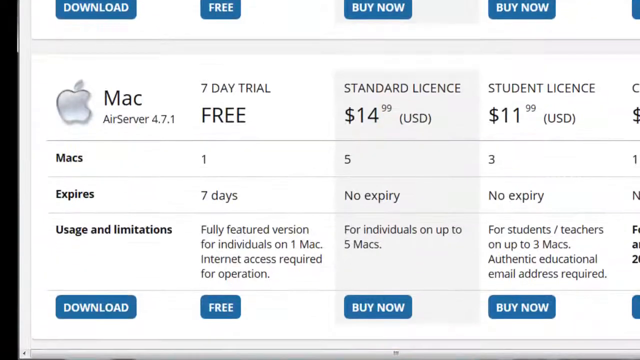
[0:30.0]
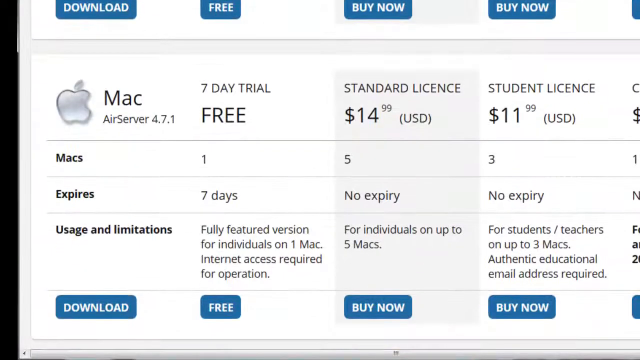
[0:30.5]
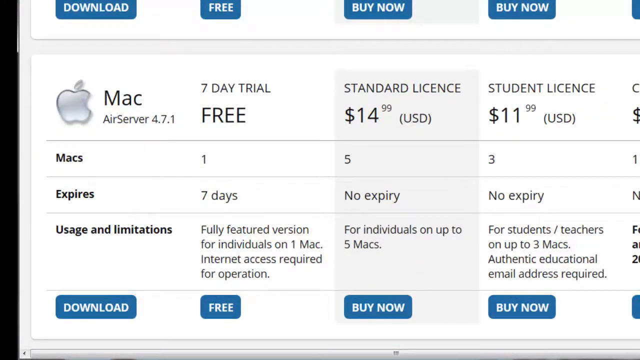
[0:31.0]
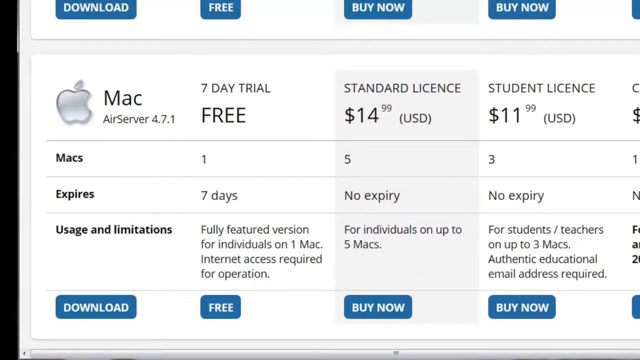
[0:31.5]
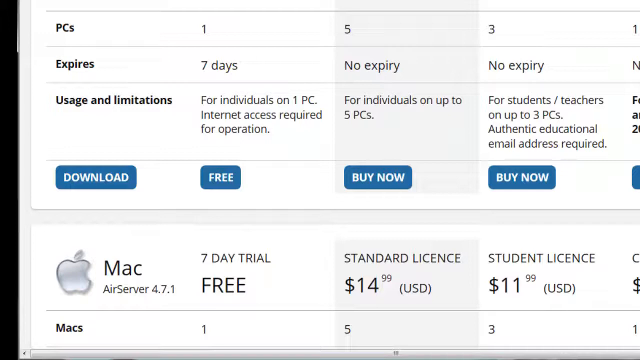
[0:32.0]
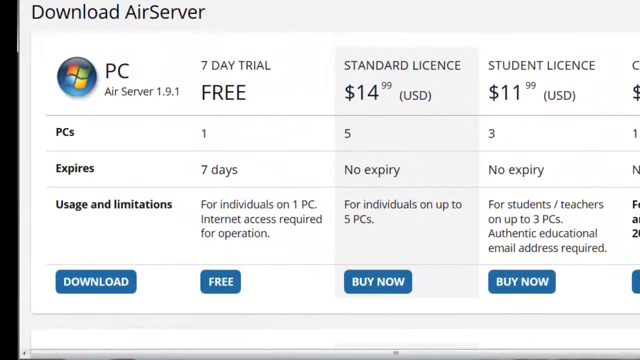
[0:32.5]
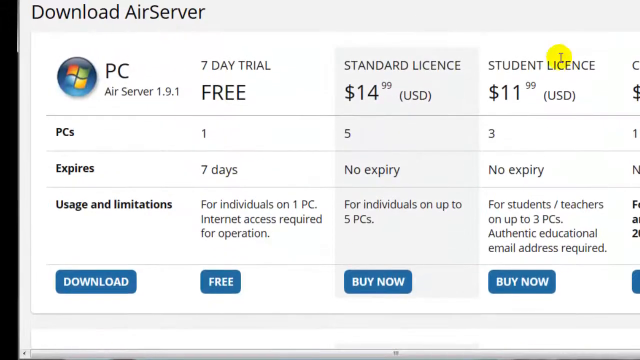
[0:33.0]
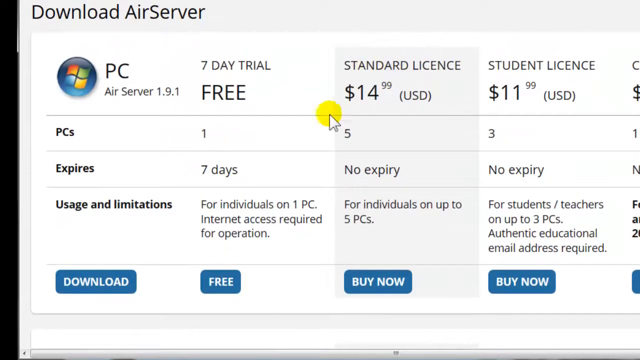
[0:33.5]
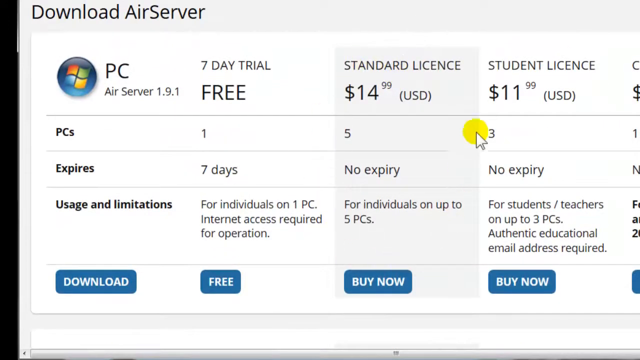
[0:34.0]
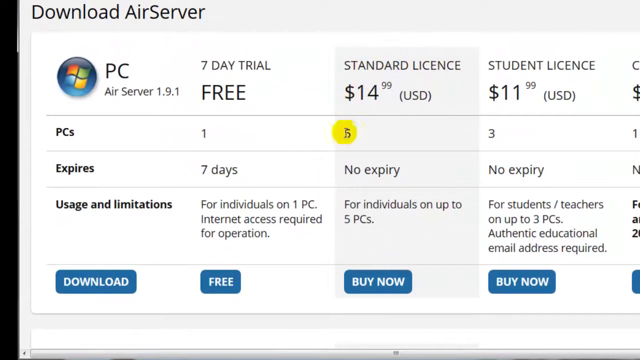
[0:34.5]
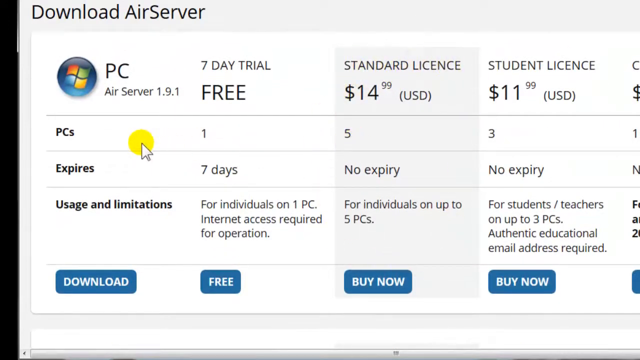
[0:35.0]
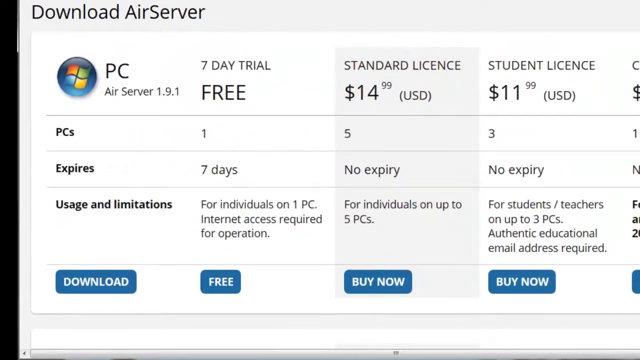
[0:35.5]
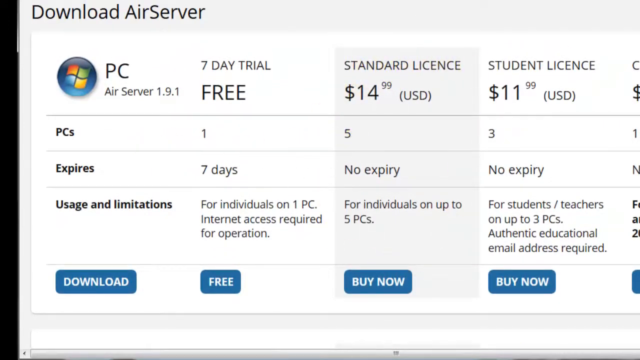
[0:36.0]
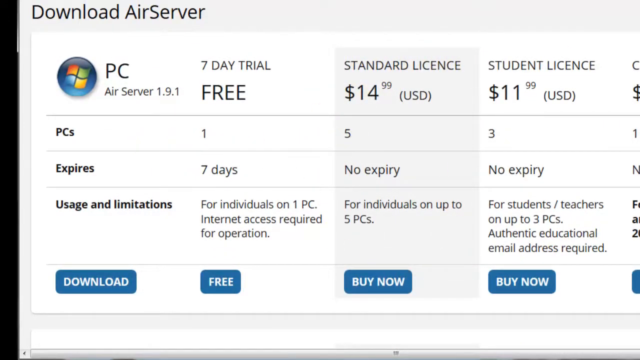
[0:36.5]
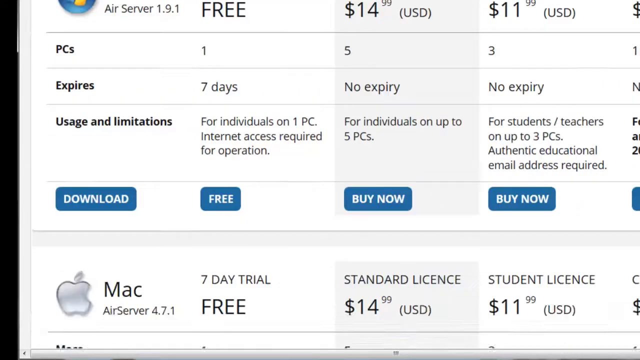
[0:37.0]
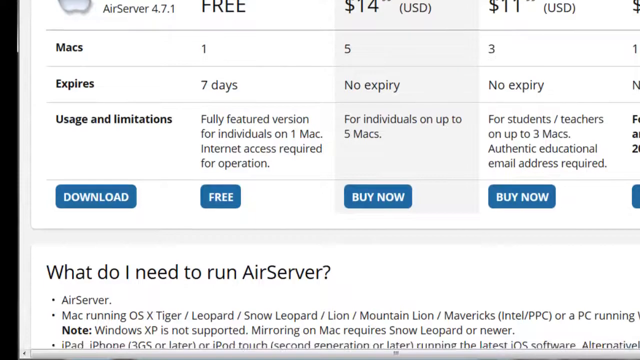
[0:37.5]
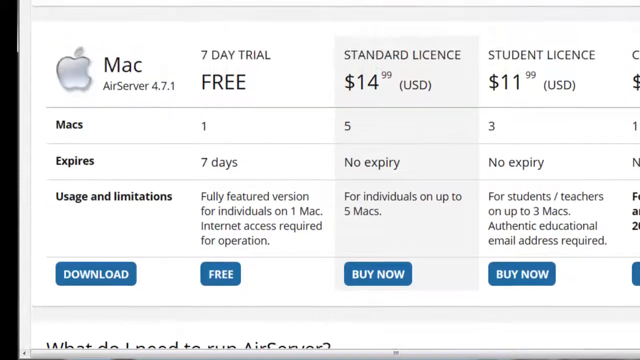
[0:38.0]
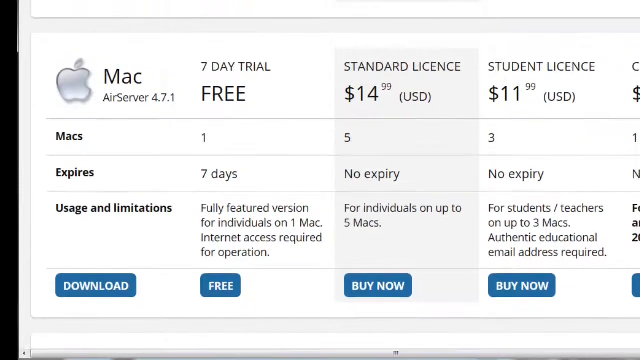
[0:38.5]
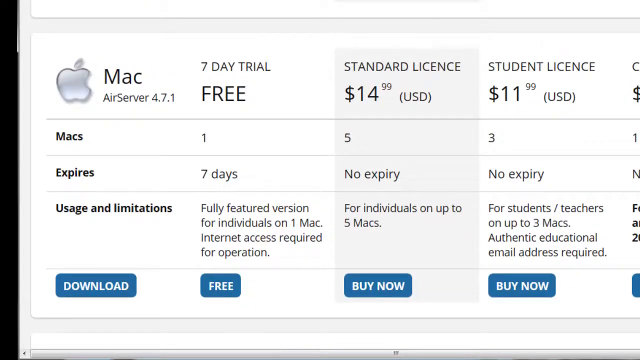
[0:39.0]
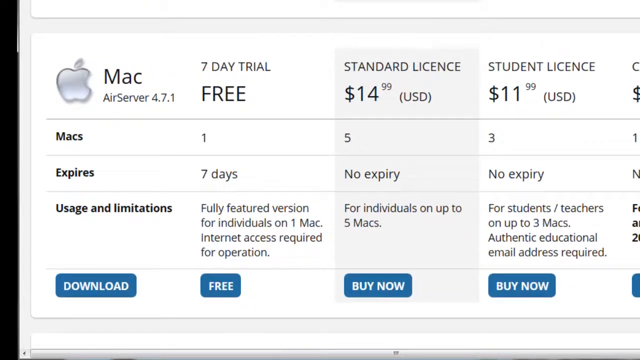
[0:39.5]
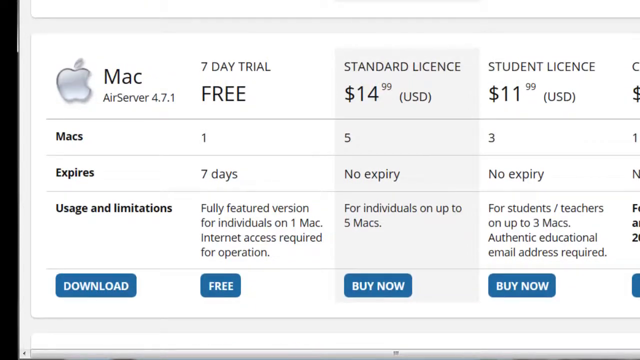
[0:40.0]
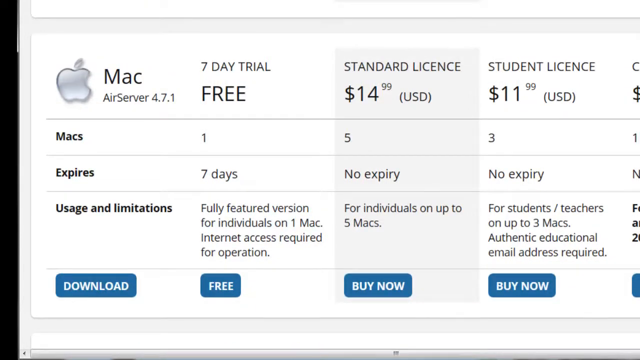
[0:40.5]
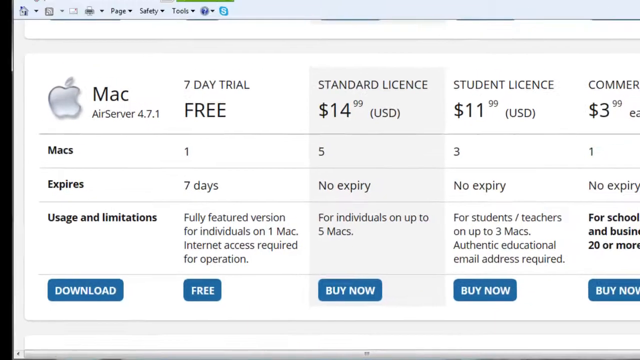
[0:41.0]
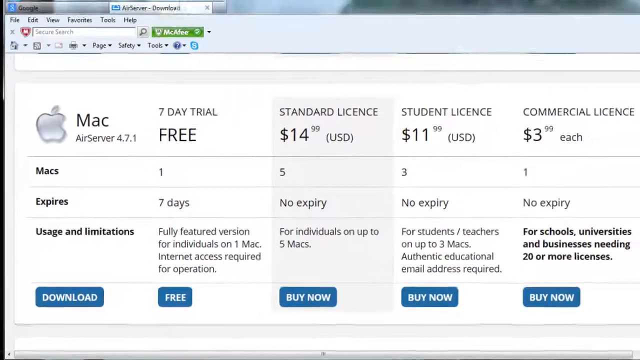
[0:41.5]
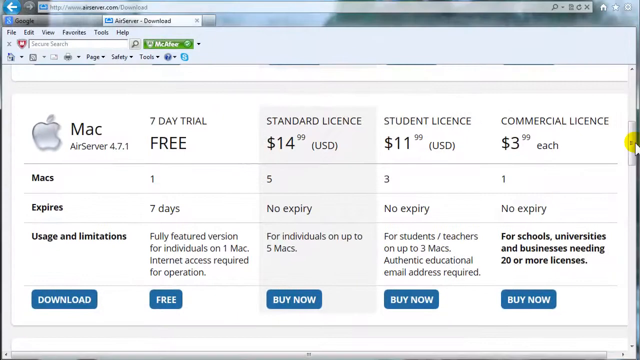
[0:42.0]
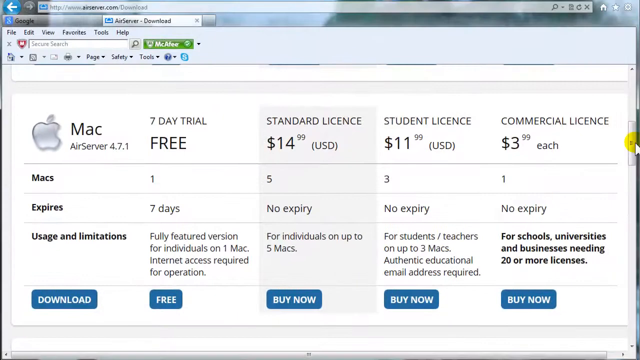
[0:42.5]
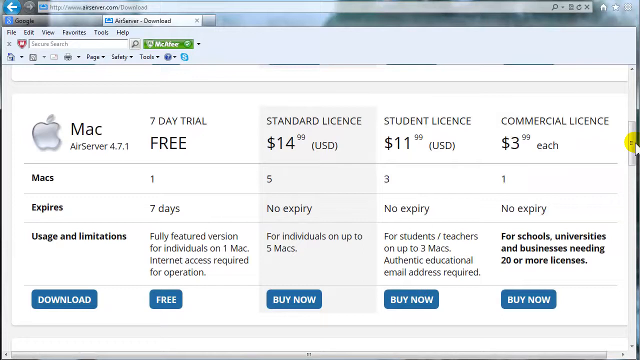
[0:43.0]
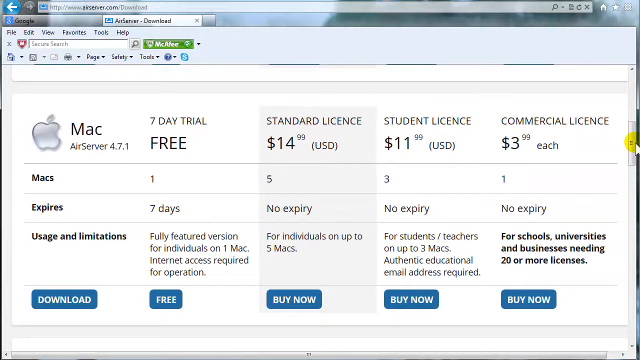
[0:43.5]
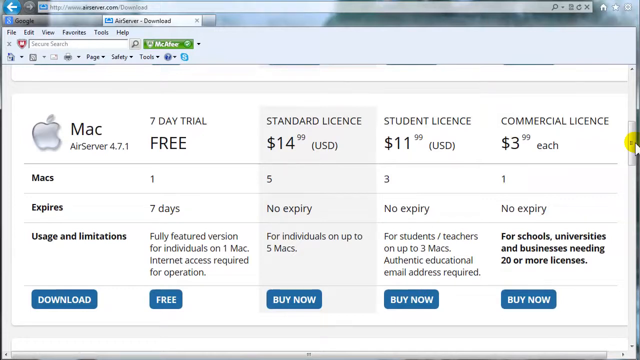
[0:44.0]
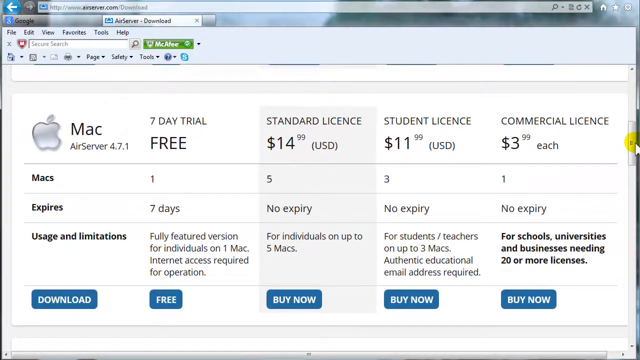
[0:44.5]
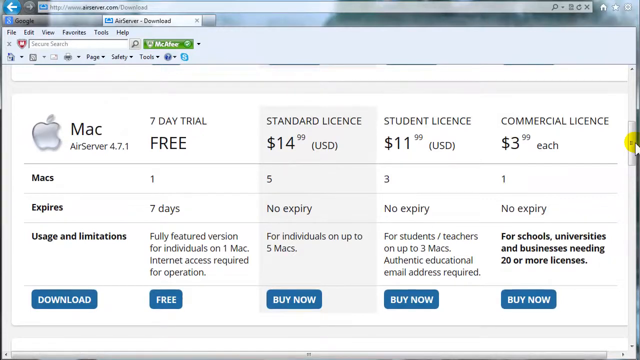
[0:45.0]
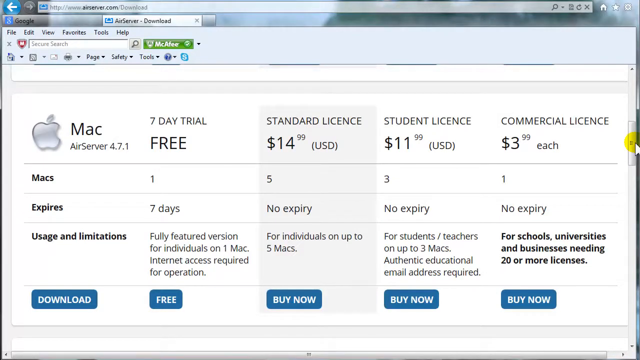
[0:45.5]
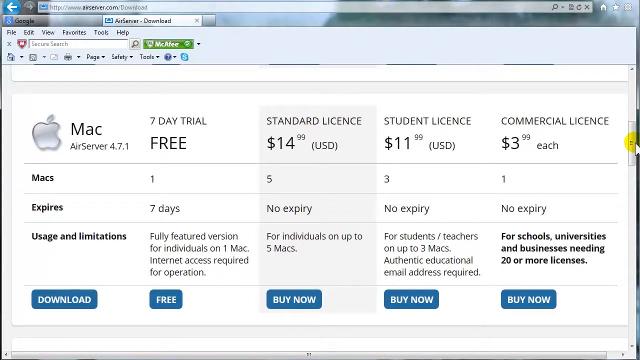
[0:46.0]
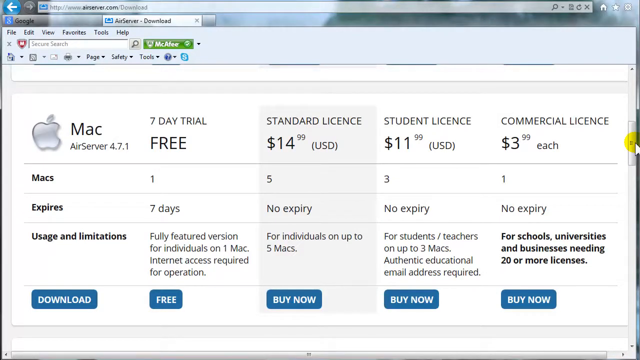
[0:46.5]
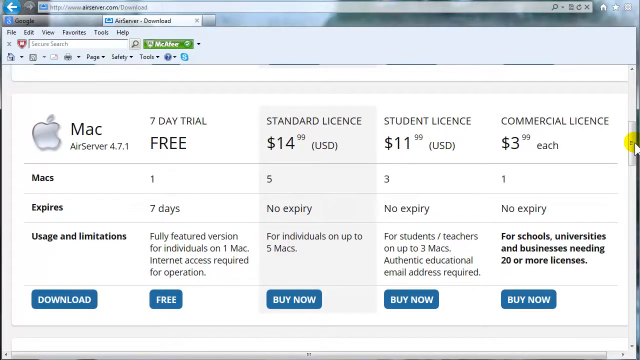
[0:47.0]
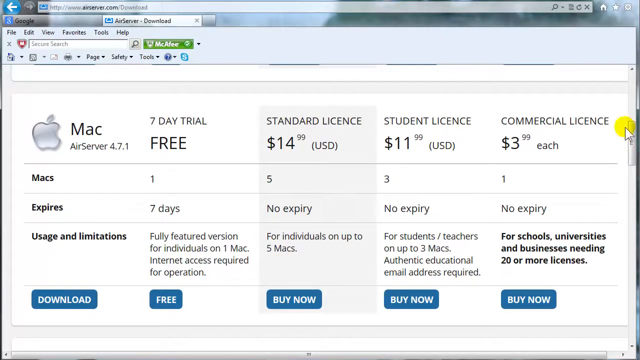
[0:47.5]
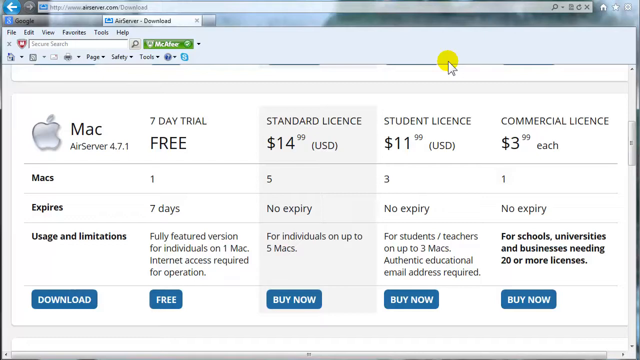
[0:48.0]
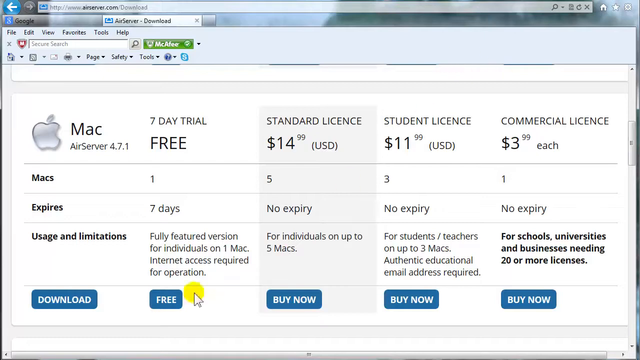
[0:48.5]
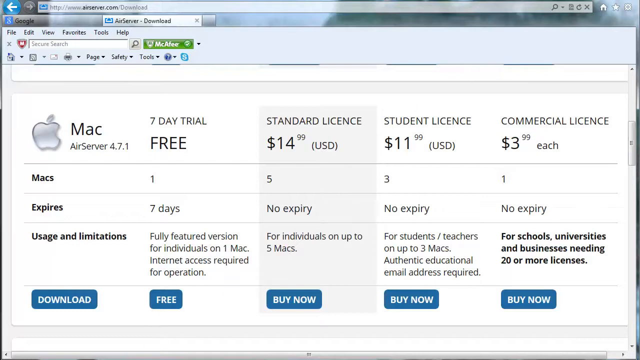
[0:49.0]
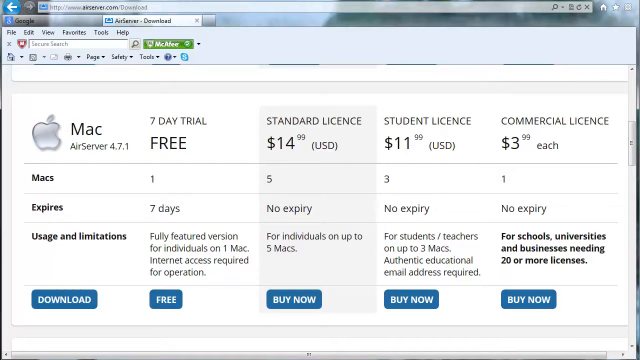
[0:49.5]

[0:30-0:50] A website appears to show different pricing packages a person can buy. The column on the left starts with "Mac AirServer 4.7.1" and says it has a seven-day free trial, with the Apple logo on its left side. Next is a gray column that says "standard license" with "$14.99" underneath, and to the right of that is a white column that says "student license, $11.99." The page scrolls up to a title that says "Download AirServer," followed by the price packages for what appears to be Windows. On the left is a column with the Microsoft logo that says "PC AirServer 1.9.1" and "seven-day free trial." Another column, in gray, says "standard license $14.99," and another says "student license $11.99."